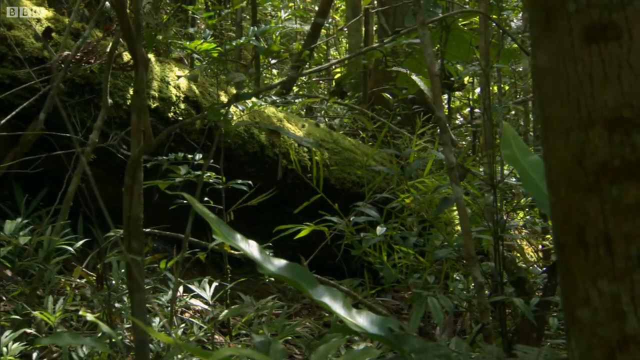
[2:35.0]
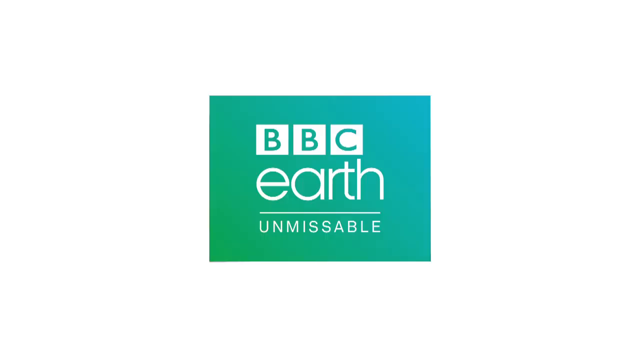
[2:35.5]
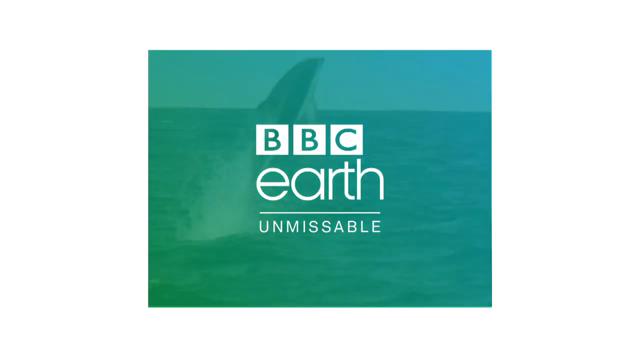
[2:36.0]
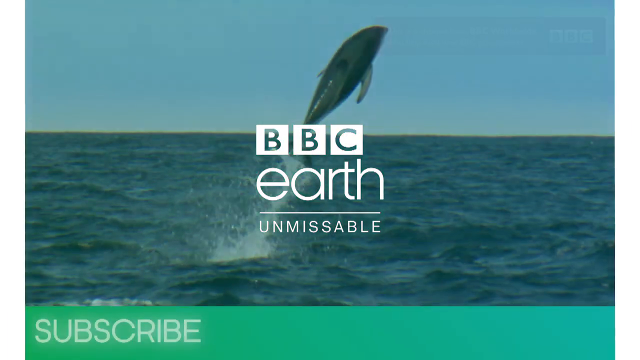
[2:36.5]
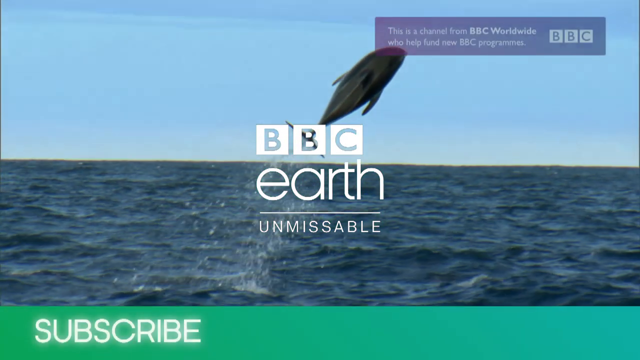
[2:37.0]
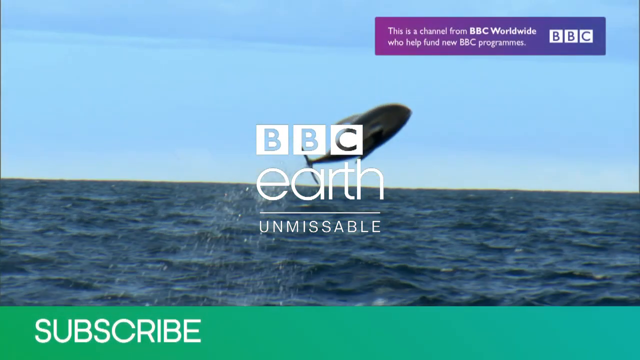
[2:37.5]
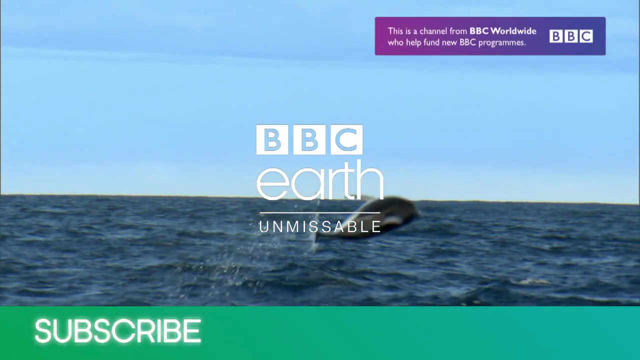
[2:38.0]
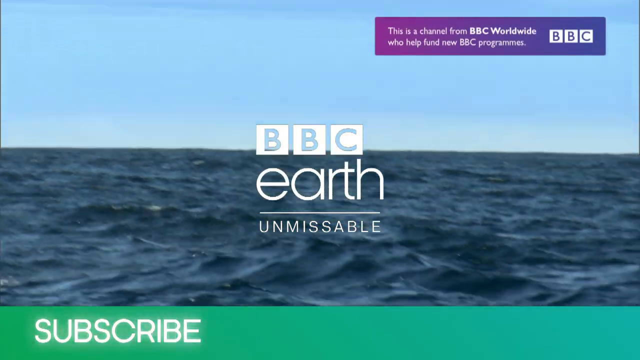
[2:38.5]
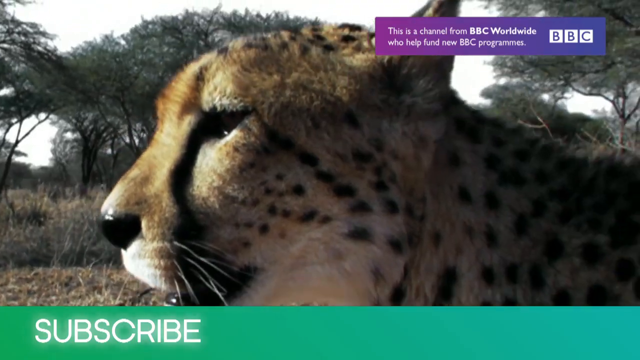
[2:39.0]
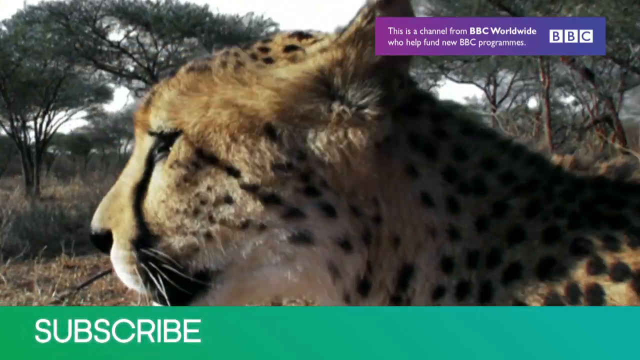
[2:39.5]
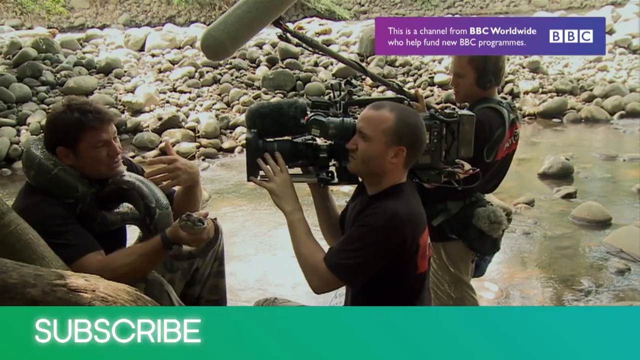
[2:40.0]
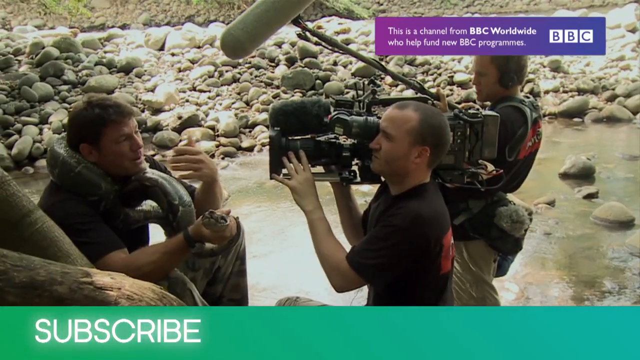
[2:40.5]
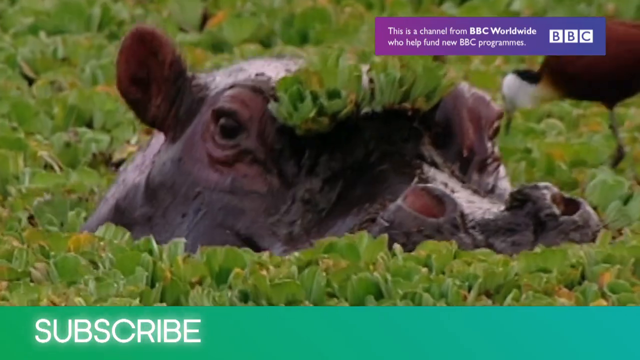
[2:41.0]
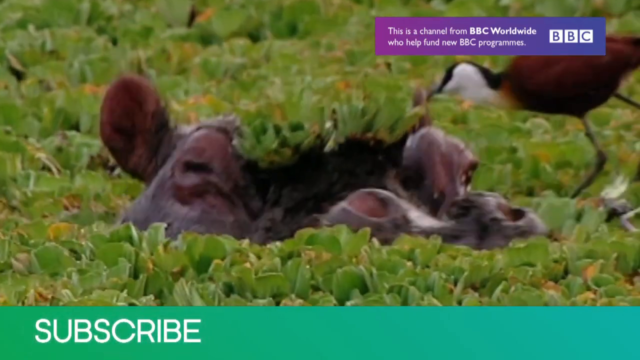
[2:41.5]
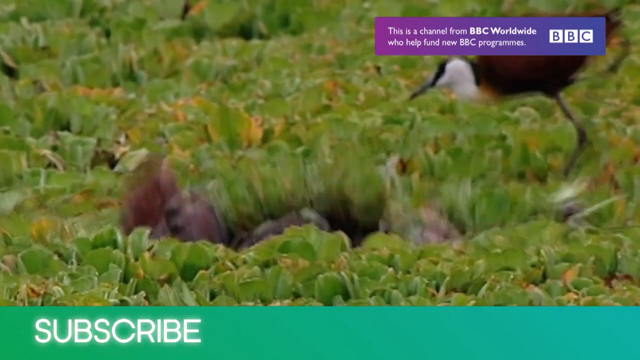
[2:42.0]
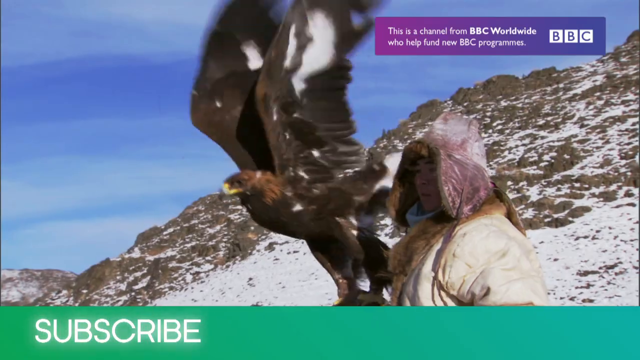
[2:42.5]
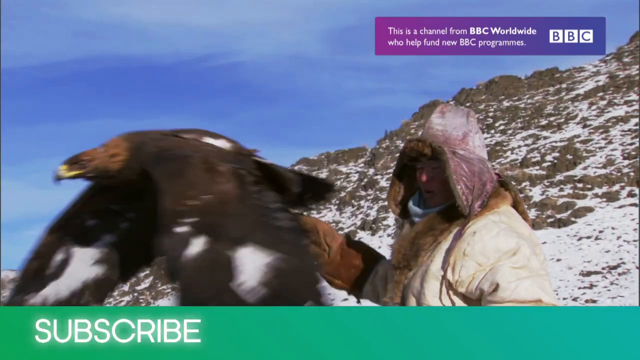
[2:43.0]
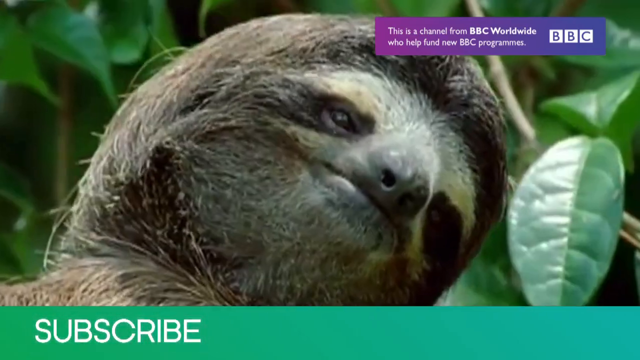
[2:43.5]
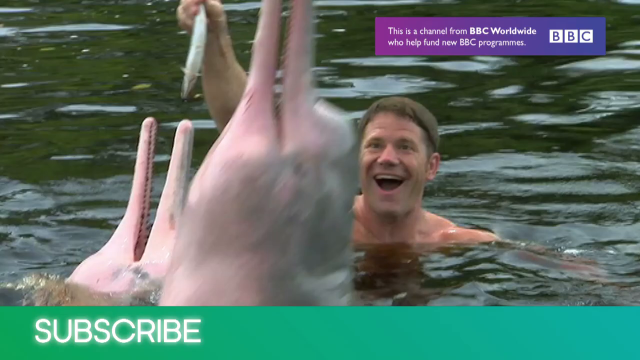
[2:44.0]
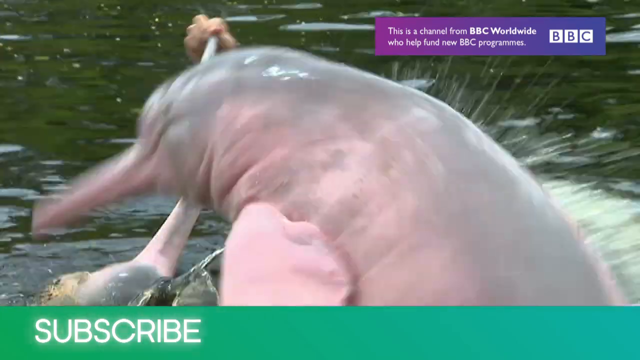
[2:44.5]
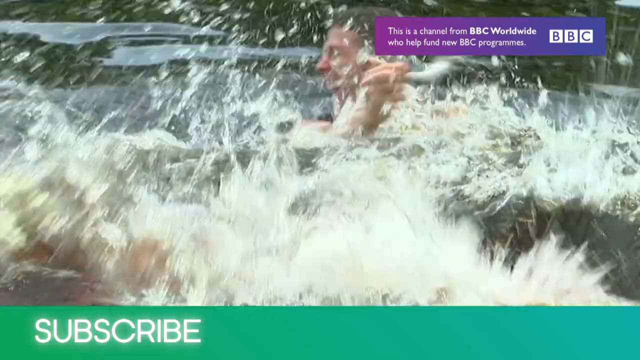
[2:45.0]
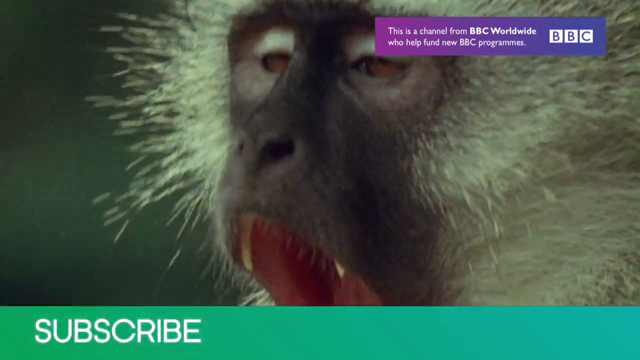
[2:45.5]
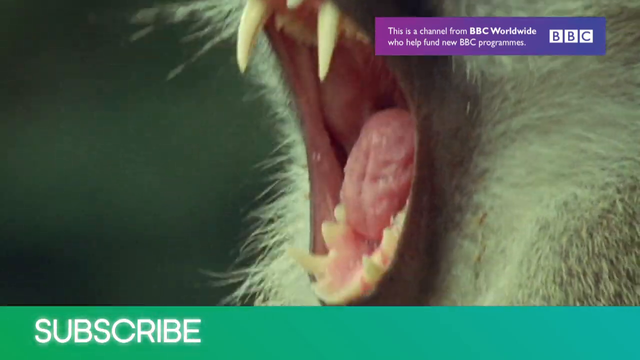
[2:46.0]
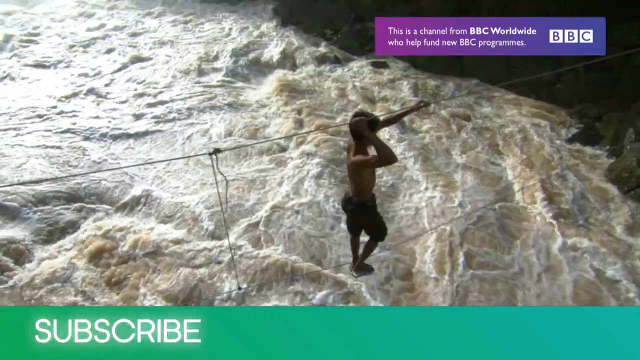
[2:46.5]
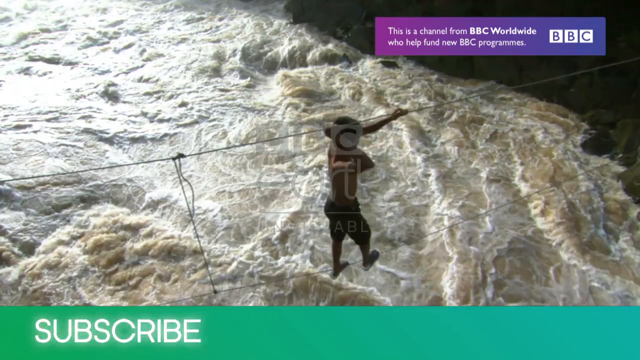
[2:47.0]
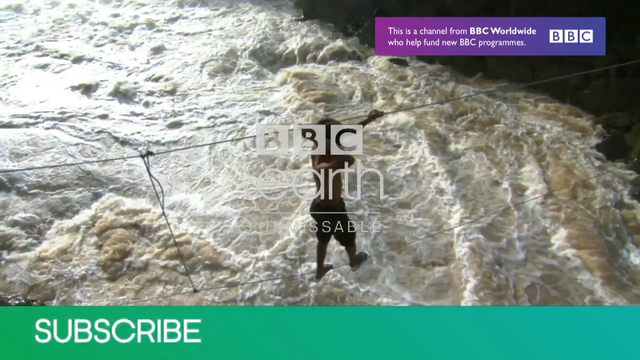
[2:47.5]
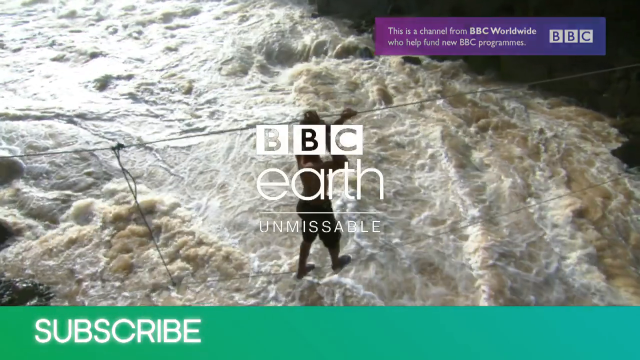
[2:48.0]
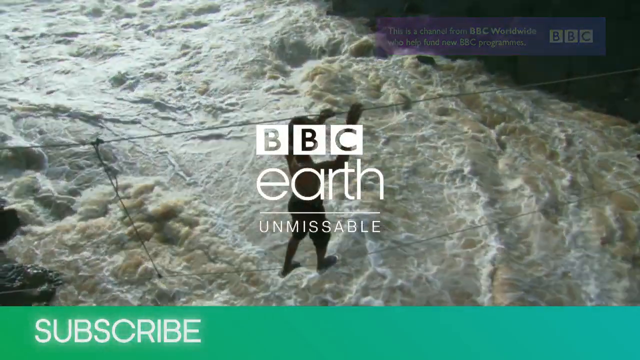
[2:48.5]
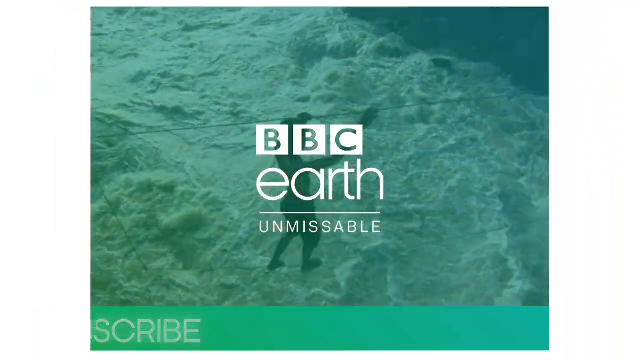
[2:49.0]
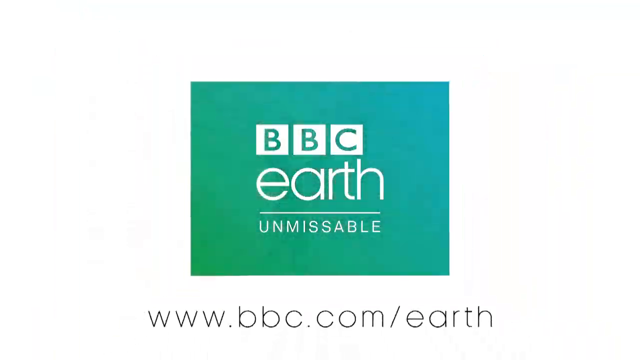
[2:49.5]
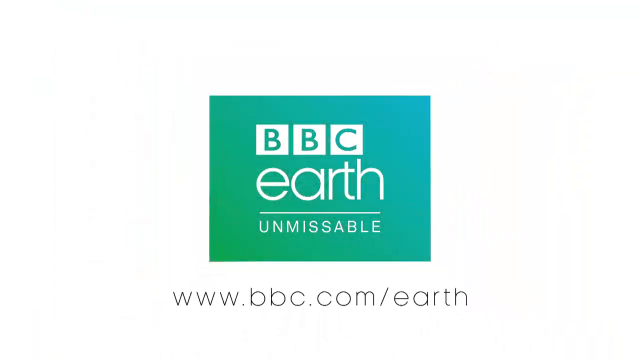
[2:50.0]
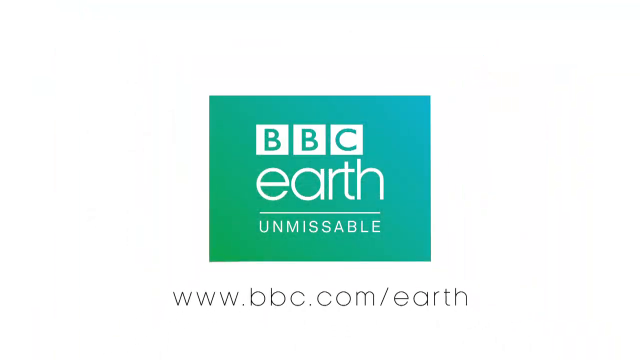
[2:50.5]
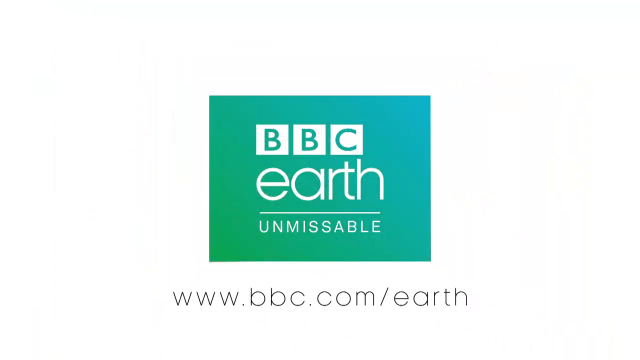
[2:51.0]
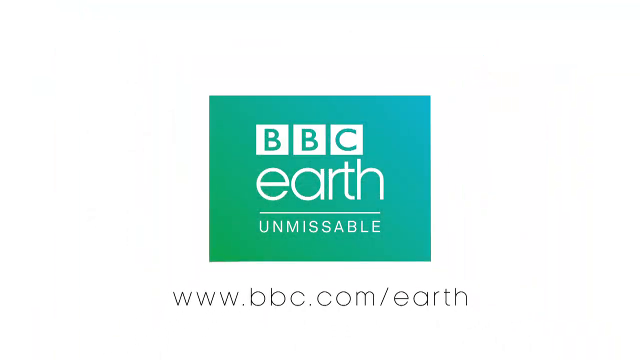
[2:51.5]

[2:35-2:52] A green gradient BBC Earth logo appears and transitions to a whale leaping out of the ocean, then a cheetah on a savannah. A cameraman talks to a man with a boa around his neck, and a hippo in a lagoon jumps underneath green plants covering the water, with a bird near the hippo's head. A farther view of a mountain shows a person with furs on his head letting a bird, maybe a falcon, fly off from his hand. A banner along the bottom of the screen says "subscribe". Then come a sloth, a man feeding a dolphin in the water, a monkey yawning, and a man crossing a raging river by walking on a rope while holding another rope above his head. The video transitions back to the BBC Earth logo, with "unmissable" and the website address bbc.com/earth beneath it. During some of this sequence, a blue box with additional text is in the top corner.